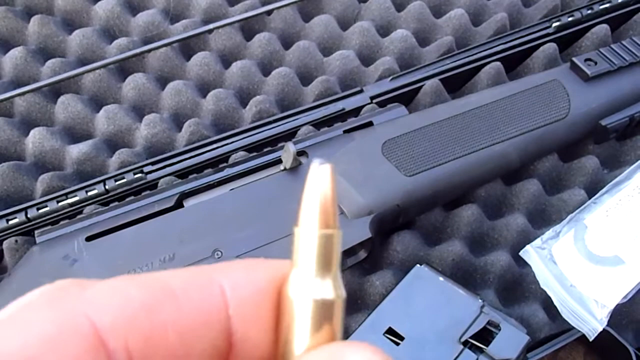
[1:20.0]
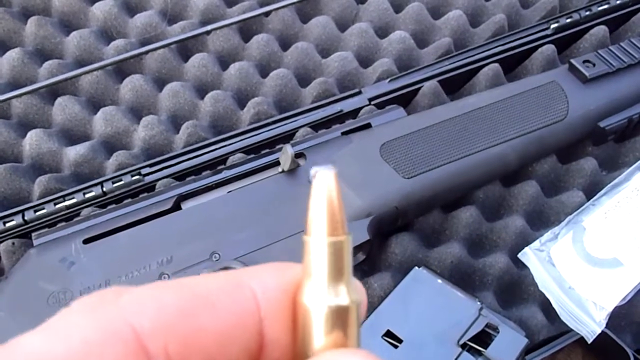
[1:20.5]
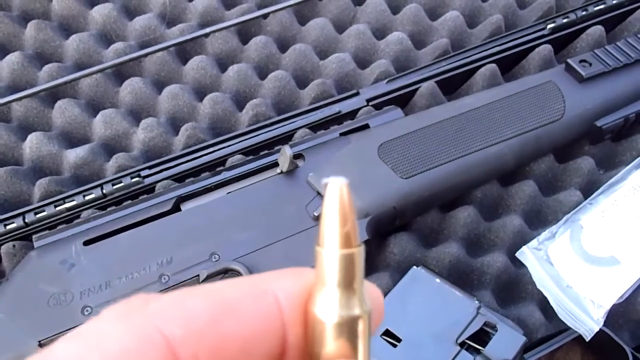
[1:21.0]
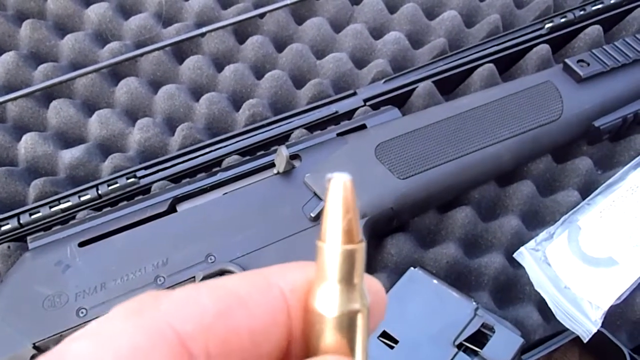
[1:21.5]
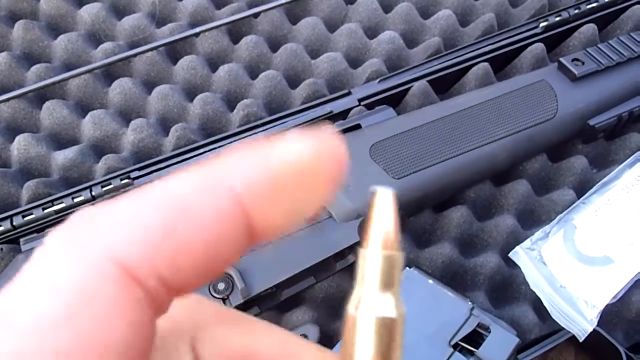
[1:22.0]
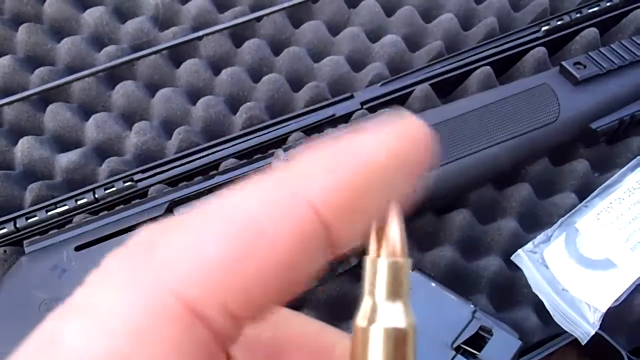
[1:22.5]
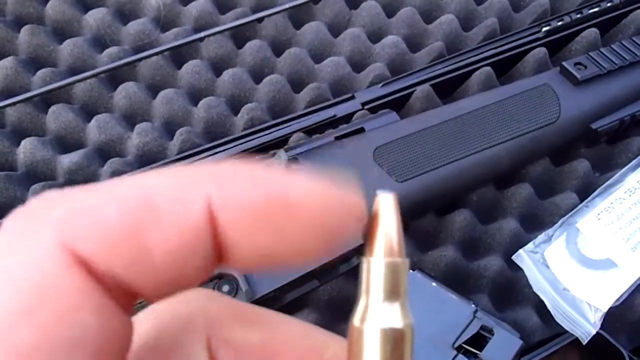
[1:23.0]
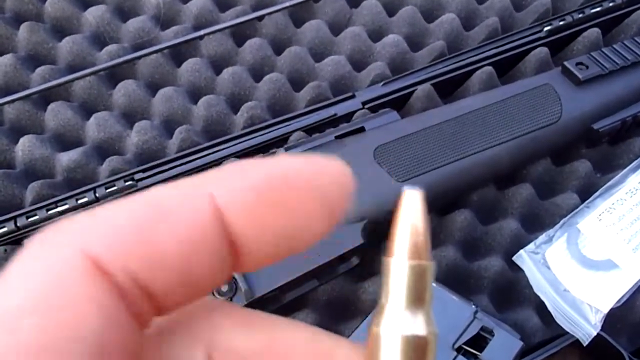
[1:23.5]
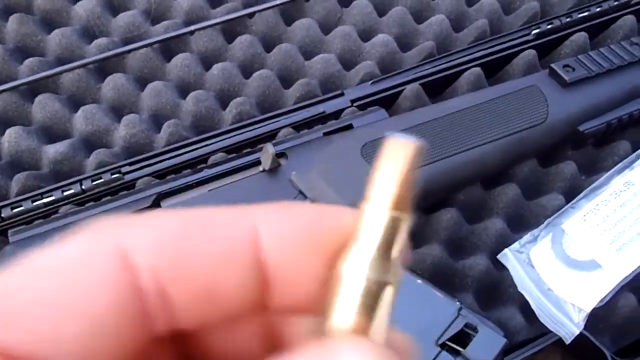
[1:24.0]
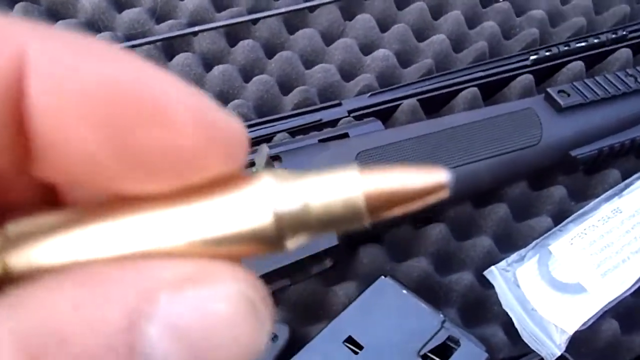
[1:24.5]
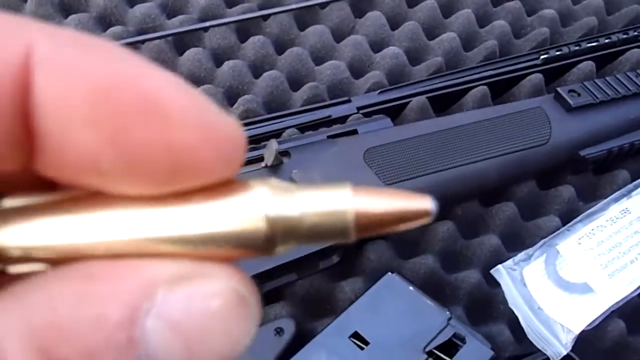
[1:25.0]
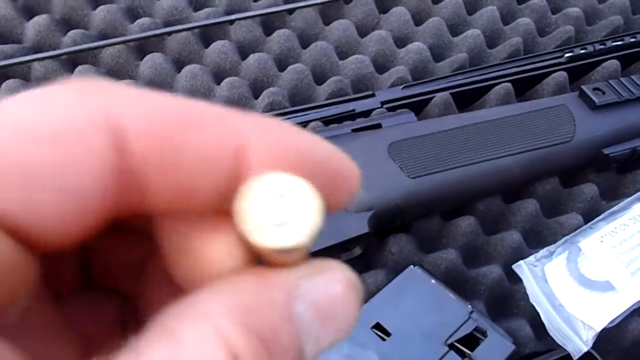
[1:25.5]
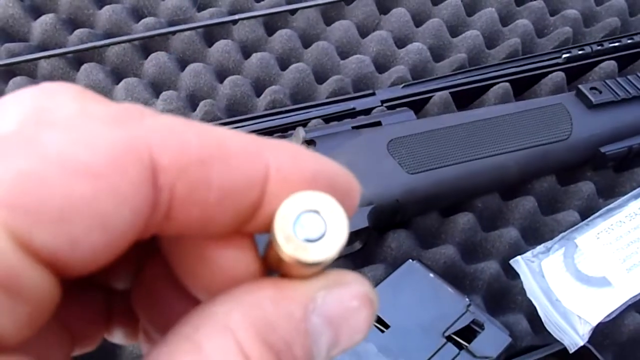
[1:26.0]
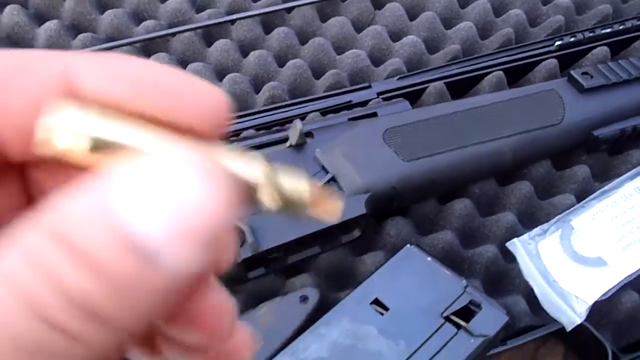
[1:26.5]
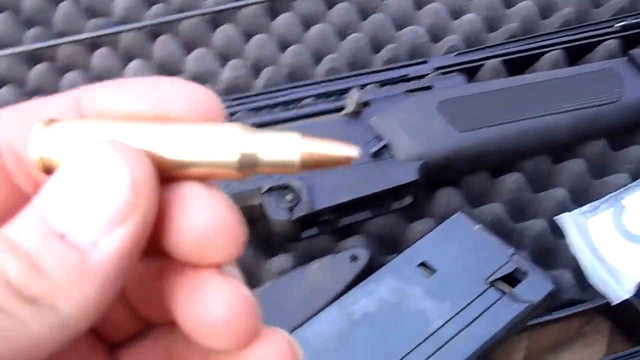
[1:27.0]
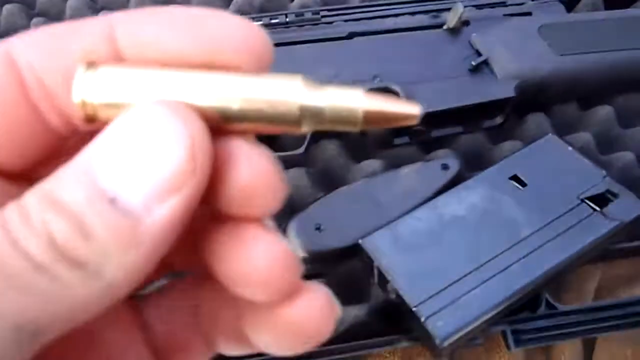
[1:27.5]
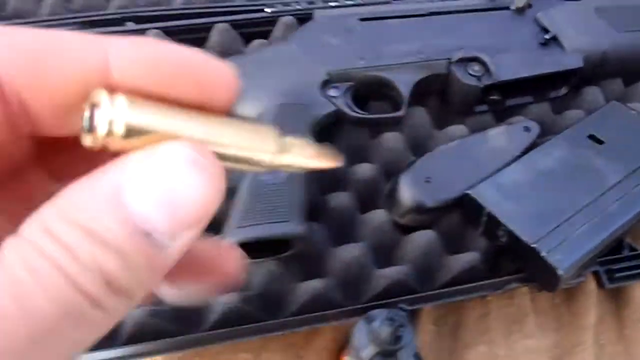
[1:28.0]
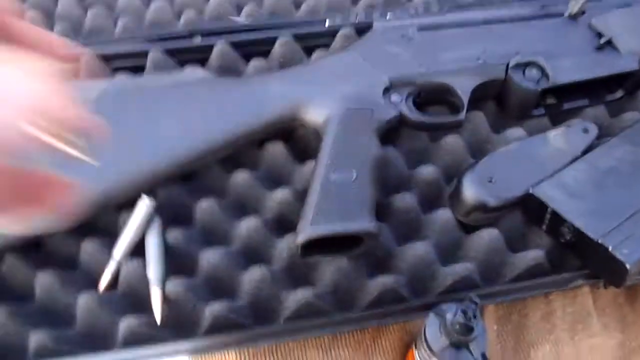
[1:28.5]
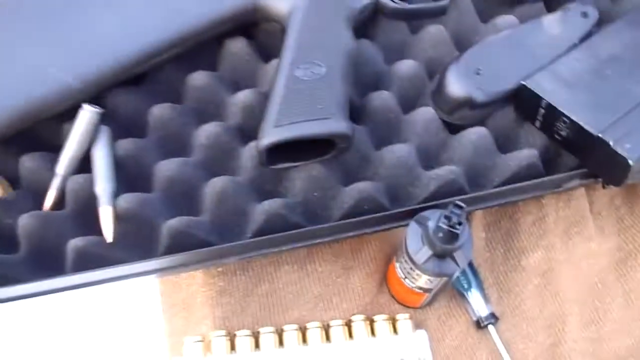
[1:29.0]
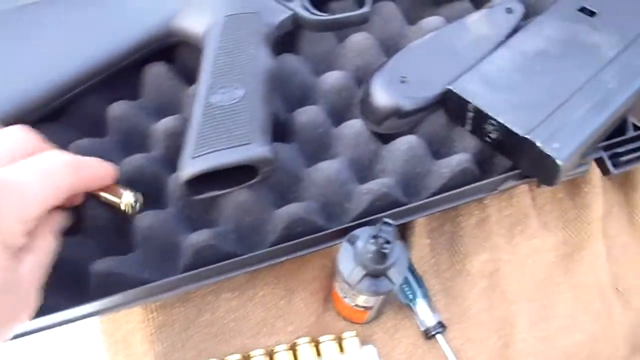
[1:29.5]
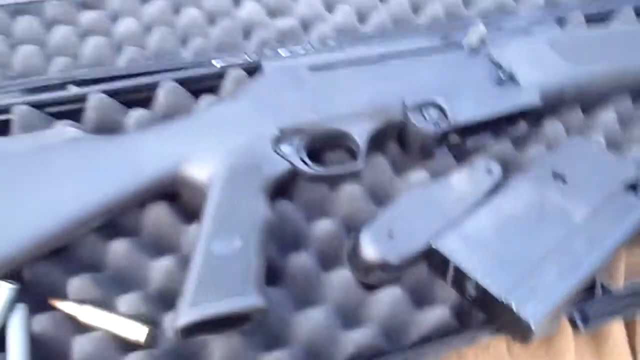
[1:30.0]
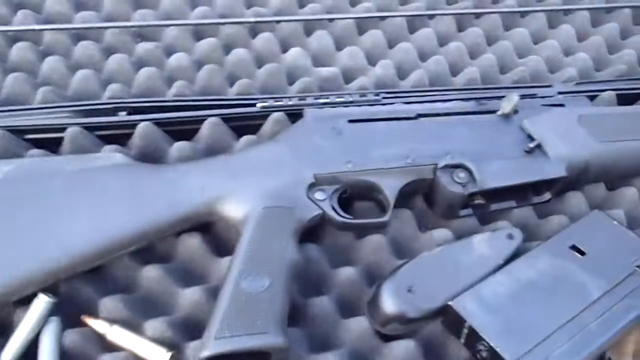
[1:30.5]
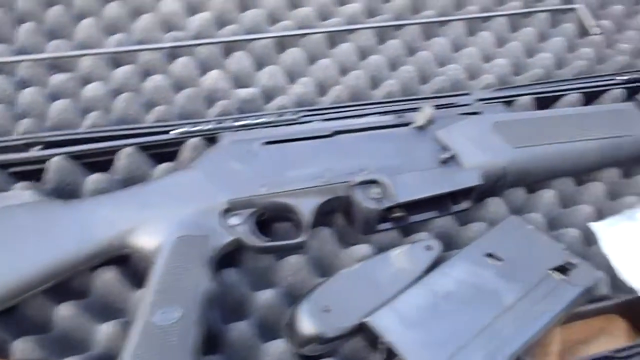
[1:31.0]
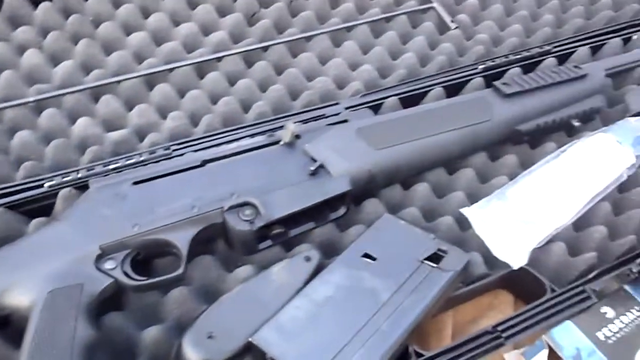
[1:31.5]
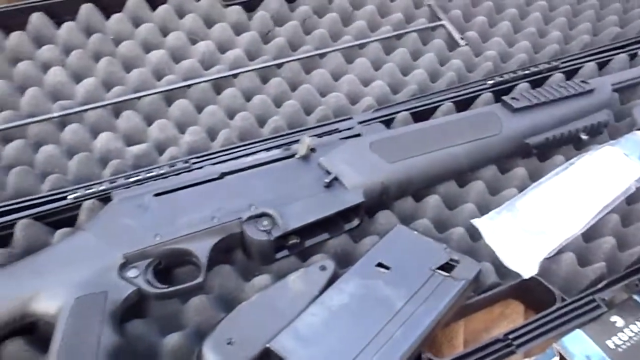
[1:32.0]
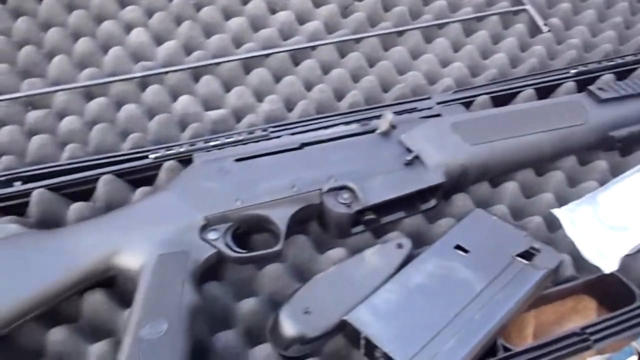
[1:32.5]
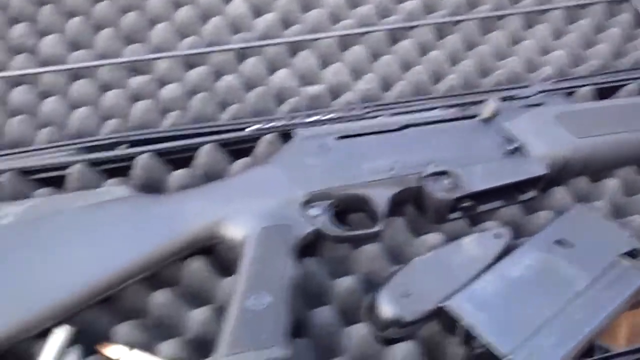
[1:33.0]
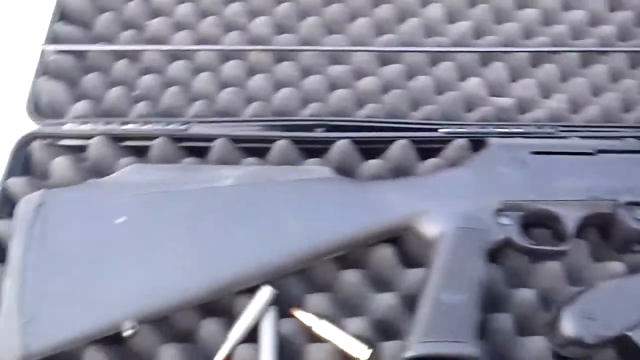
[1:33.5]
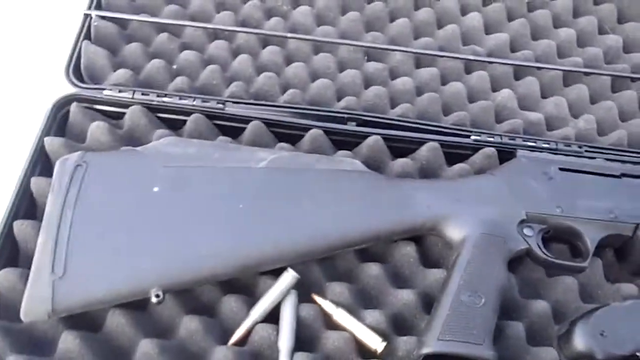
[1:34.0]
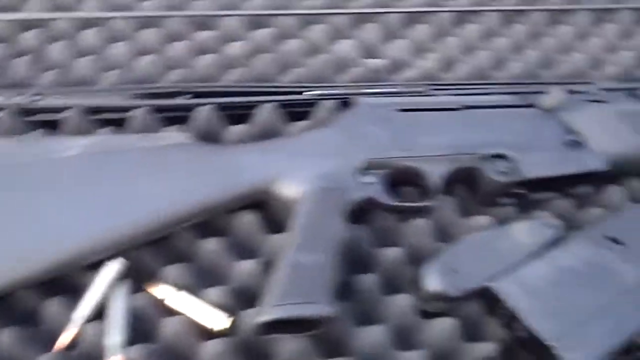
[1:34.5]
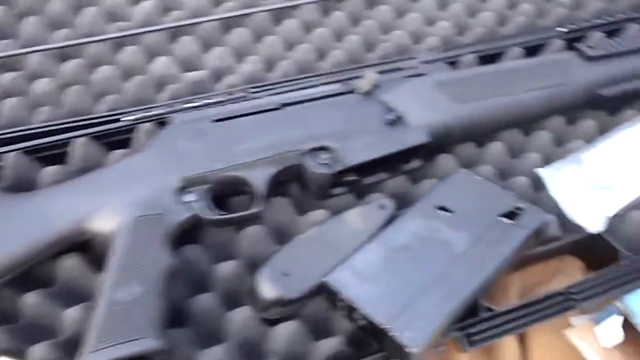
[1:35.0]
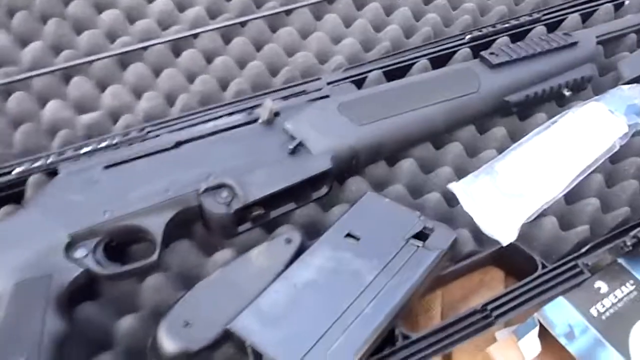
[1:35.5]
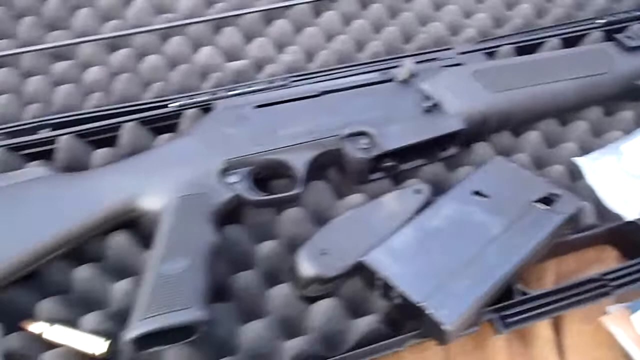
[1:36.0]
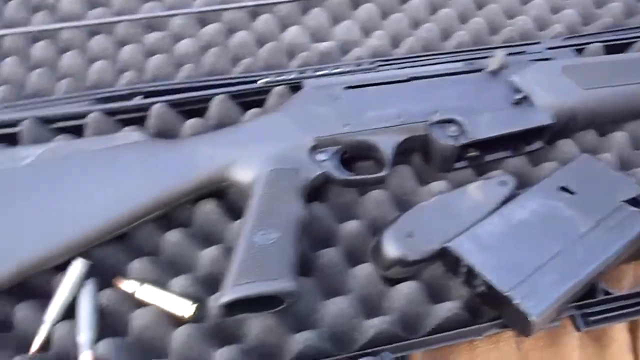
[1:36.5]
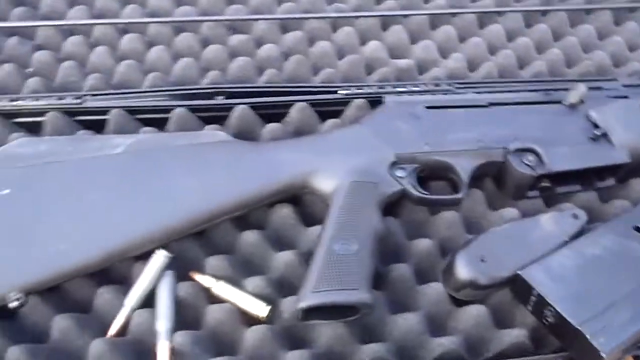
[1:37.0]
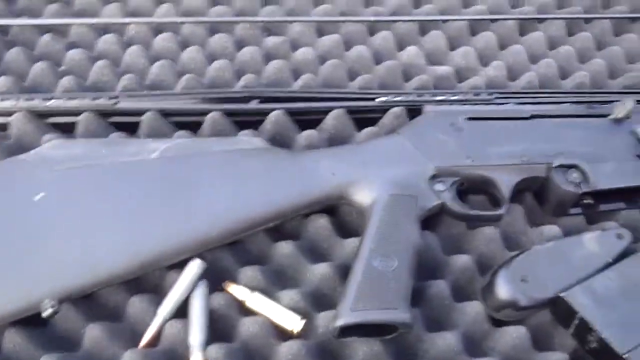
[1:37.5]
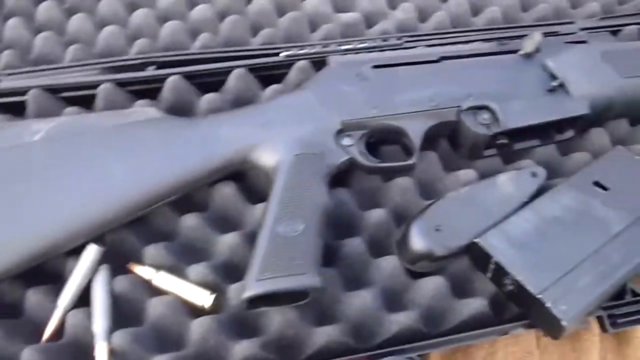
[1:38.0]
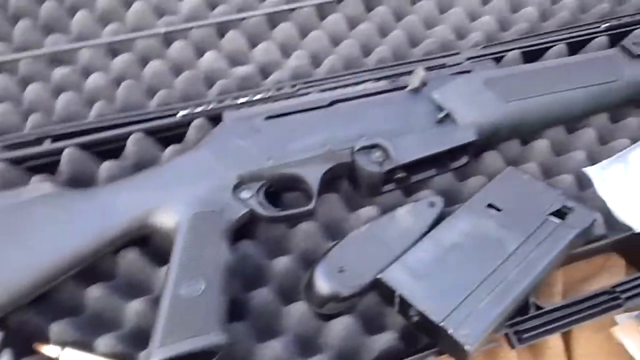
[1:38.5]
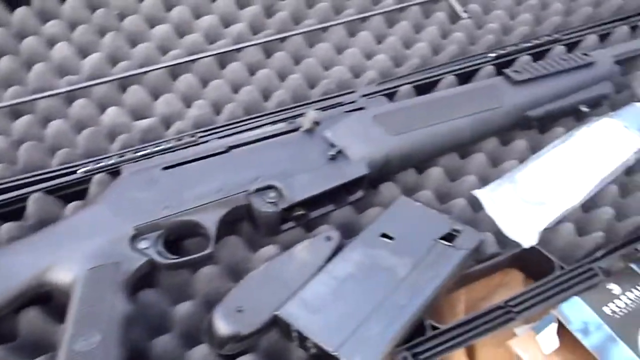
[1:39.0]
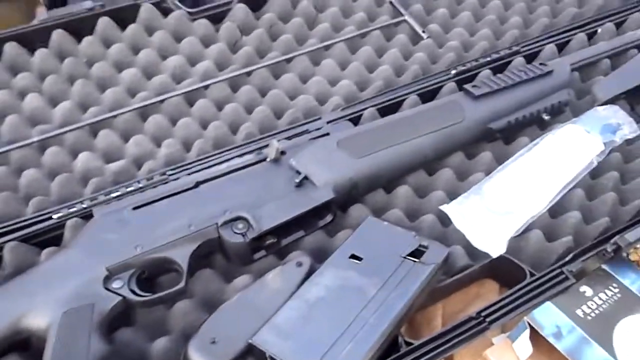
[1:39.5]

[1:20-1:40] The man brings the tip of the ammunition closer to the screen; it is apparently a 7.62 or a 5.56. He plays with the ammunition. Multiple rounds are laid next to the gun, and other equipment is laying next to it as well. The case is black and the weapon itself is black, while the ammunition is bronze.